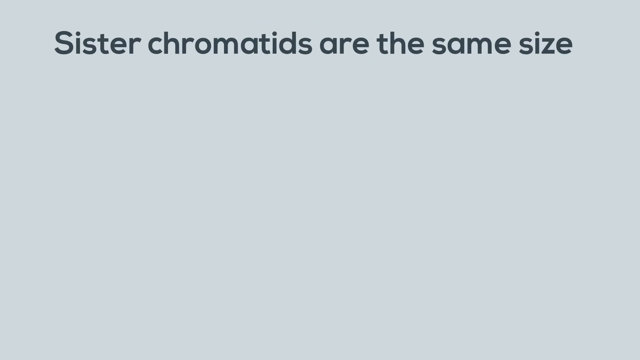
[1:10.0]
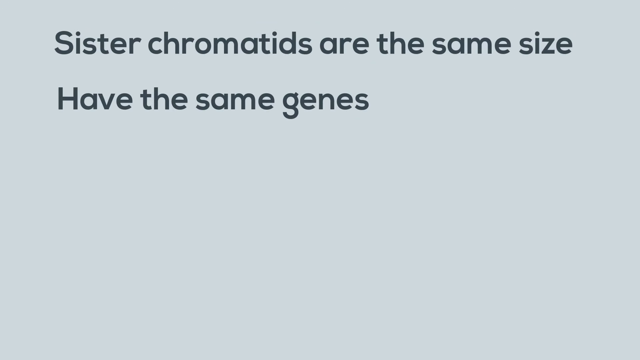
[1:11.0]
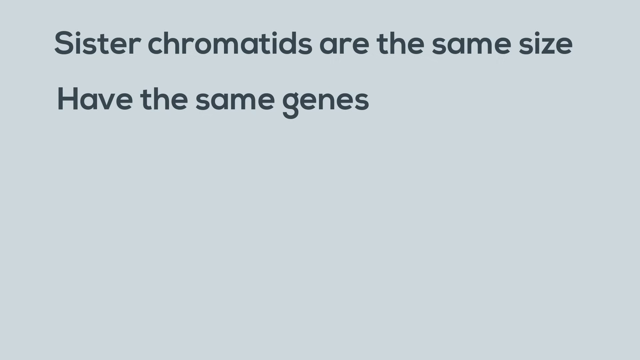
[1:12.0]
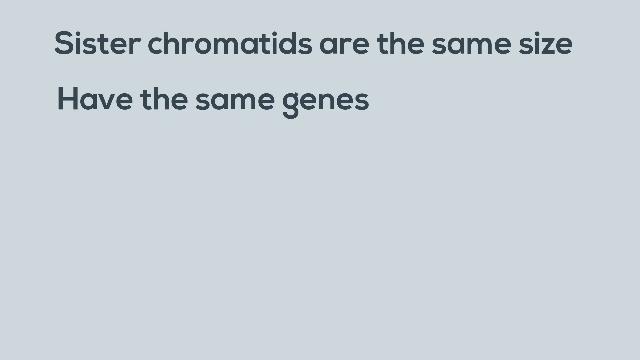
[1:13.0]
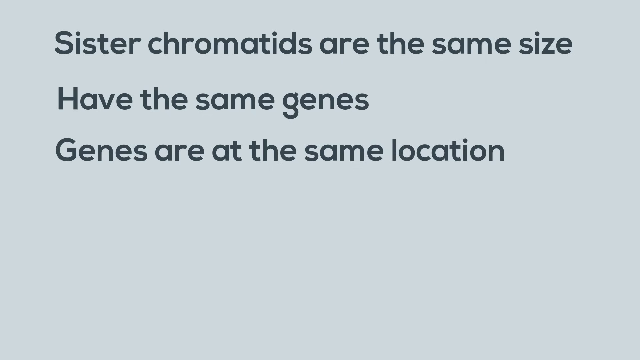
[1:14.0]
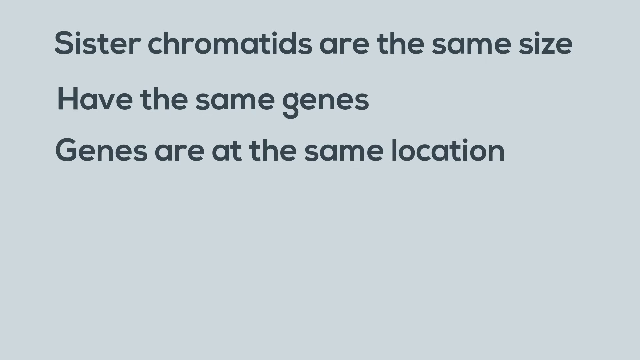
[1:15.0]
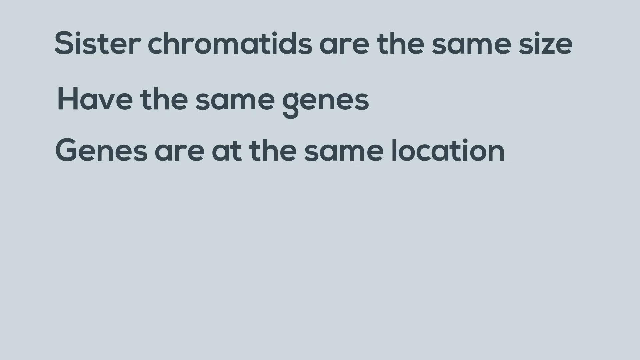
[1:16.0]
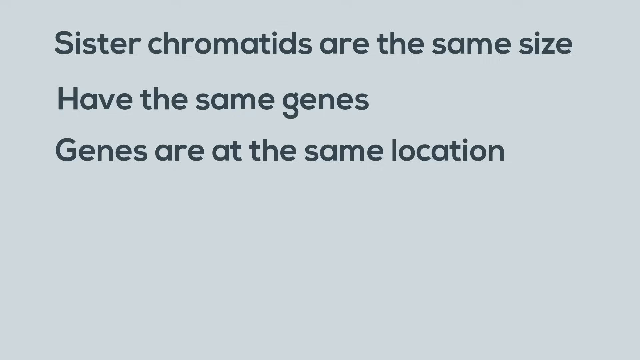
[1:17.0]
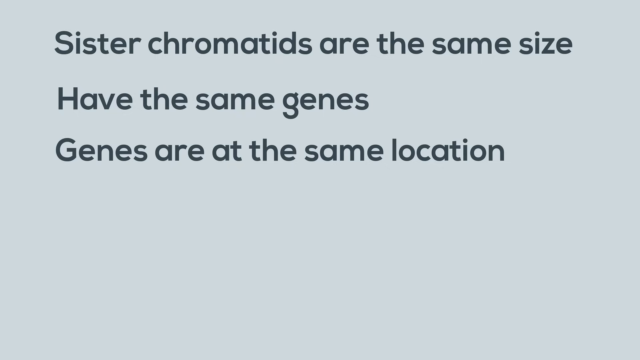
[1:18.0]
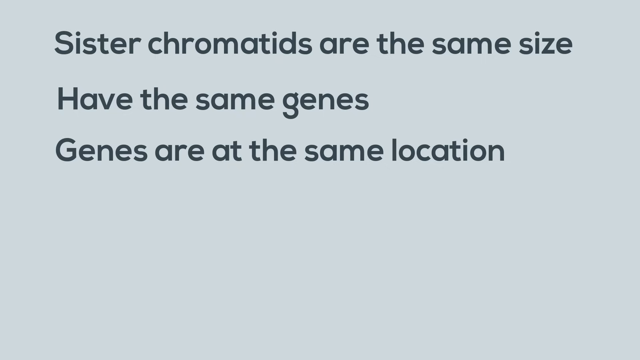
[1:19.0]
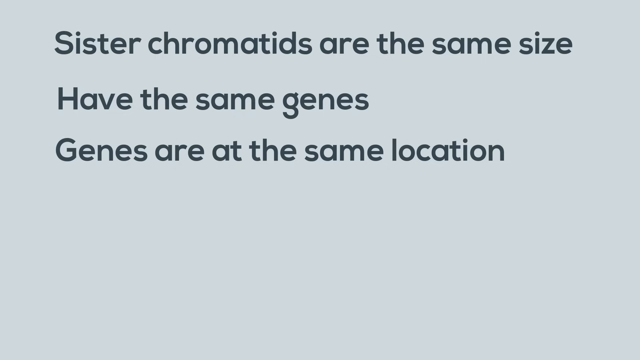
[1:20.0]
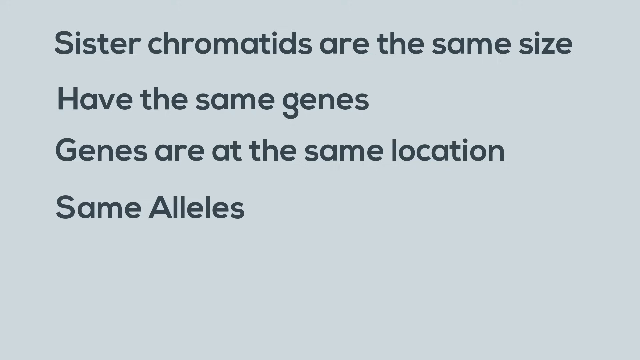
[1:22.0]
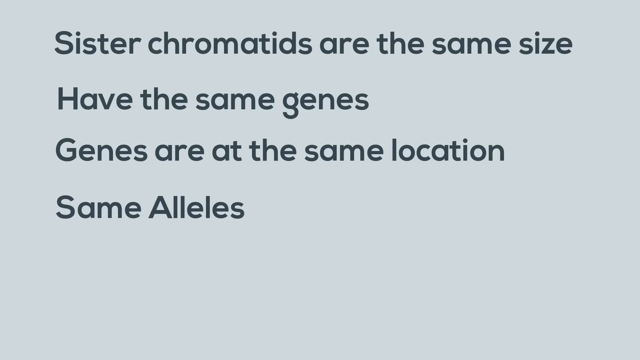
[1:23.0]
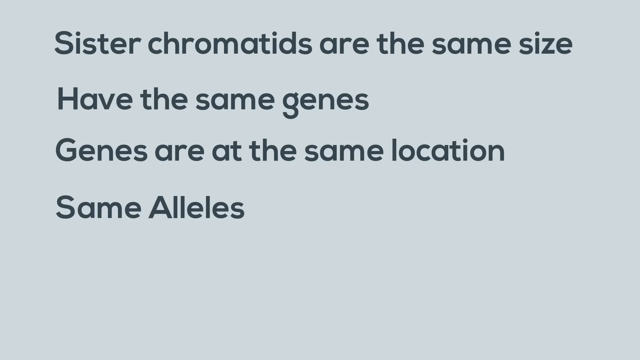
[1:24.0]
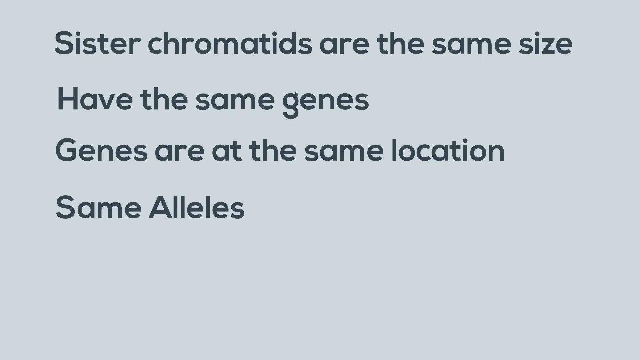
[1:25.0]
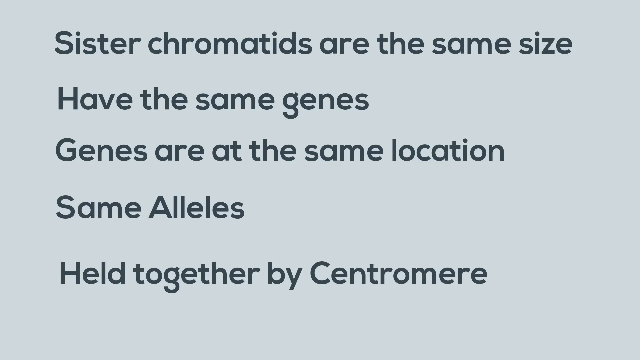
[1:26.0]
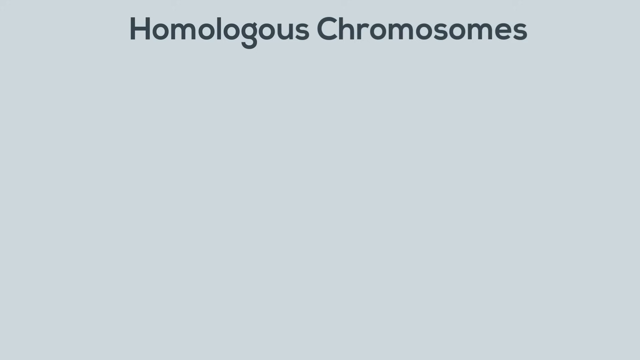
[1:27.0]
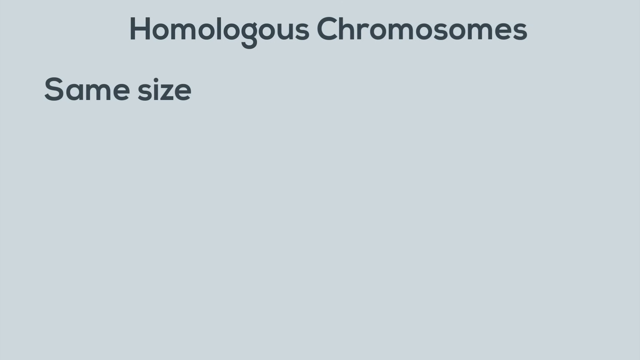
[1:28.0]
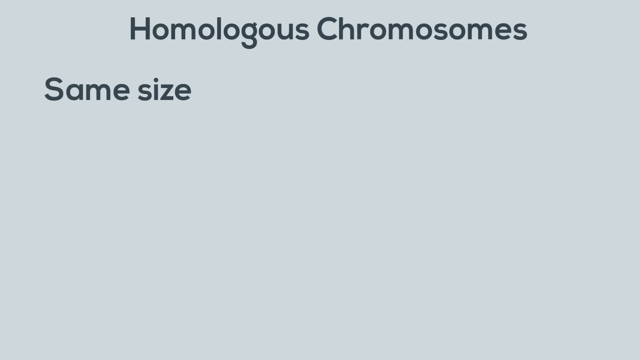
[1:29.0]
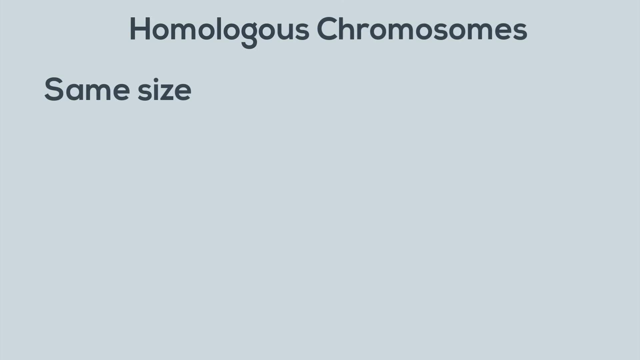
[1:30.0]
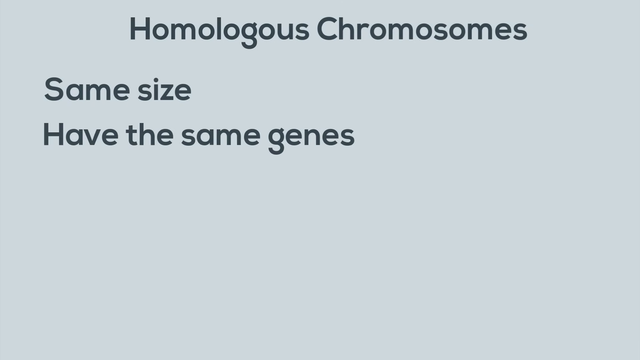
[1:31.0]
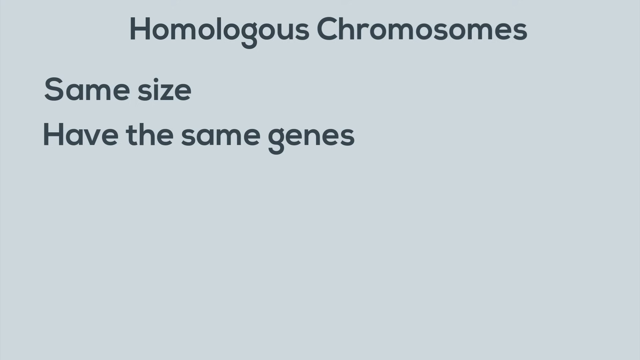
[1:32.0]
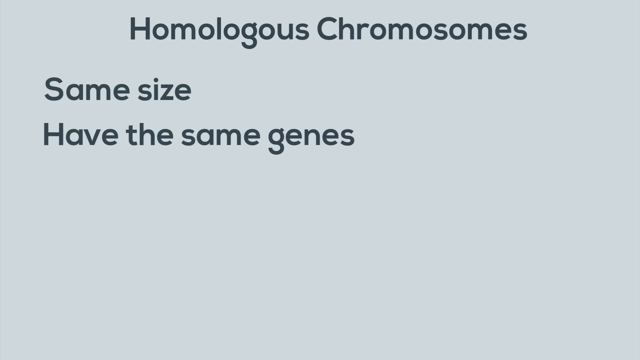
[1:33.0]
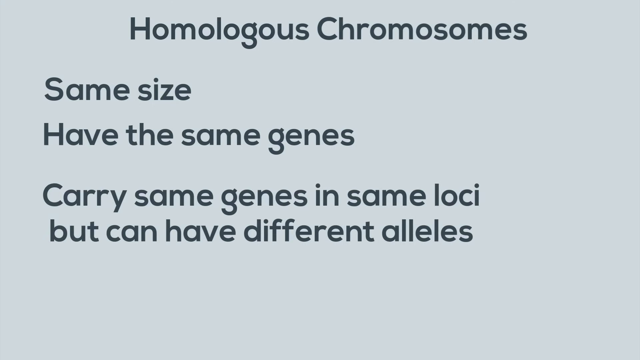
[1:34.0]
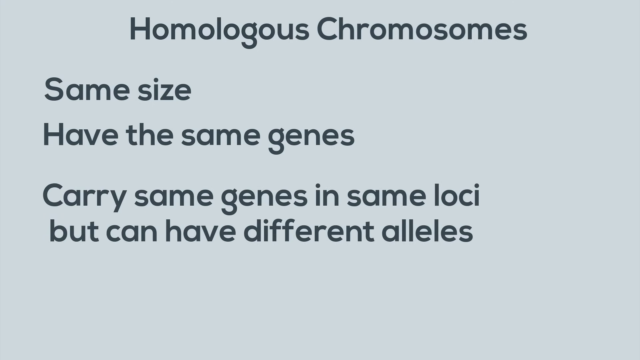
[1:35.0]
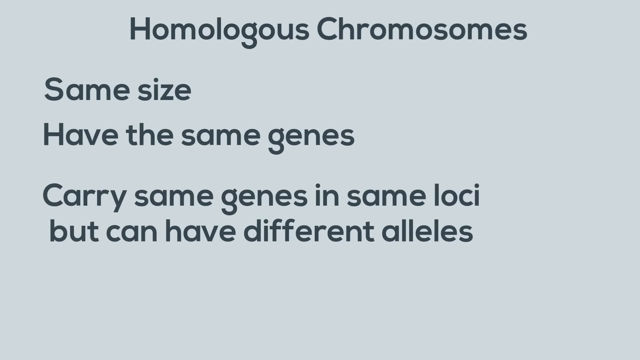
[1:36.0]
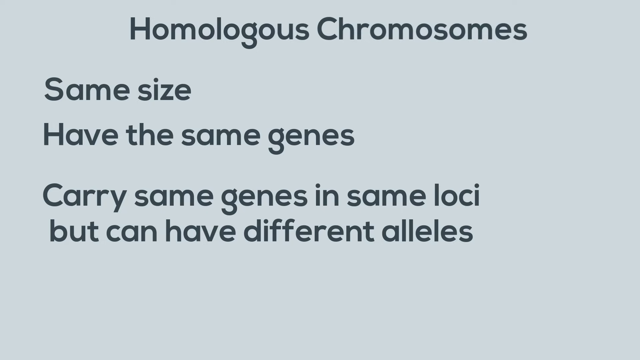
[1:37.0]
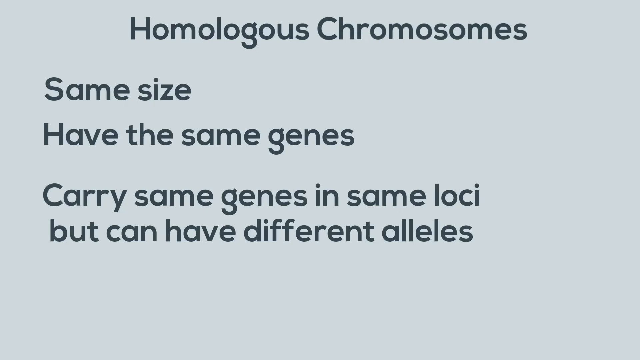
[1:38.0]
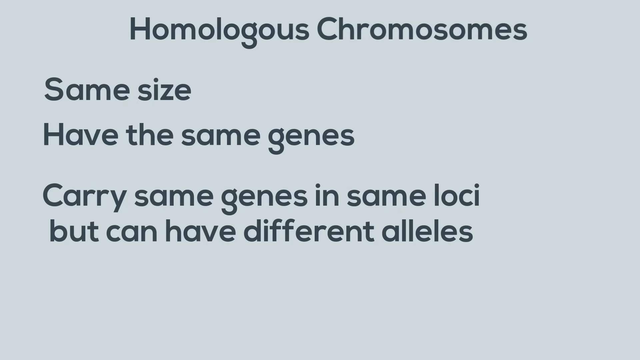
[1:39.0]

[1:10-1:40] Text appears listing that sister chromatids "are the same sizes" and "have the same genes", with the genes at the same location, then "same alleles", and that they are held together. Next, text on homologous chromosomes says they "have the same size", "have the same genes", "carry same genes and same loci" but "have different alleles", contrasting the two. The background is light blue and the text is a dark grayish color, easy to read. The video slows down enough for the text to be read, and there are no distractions on the screen.